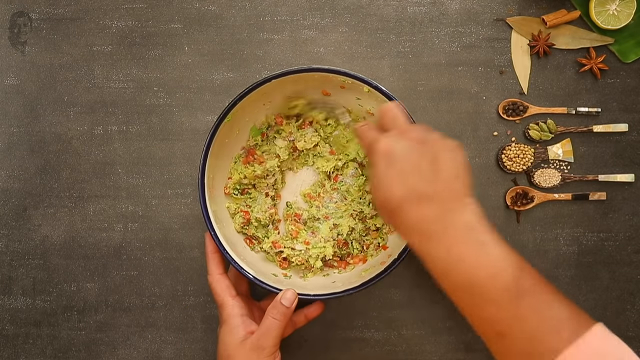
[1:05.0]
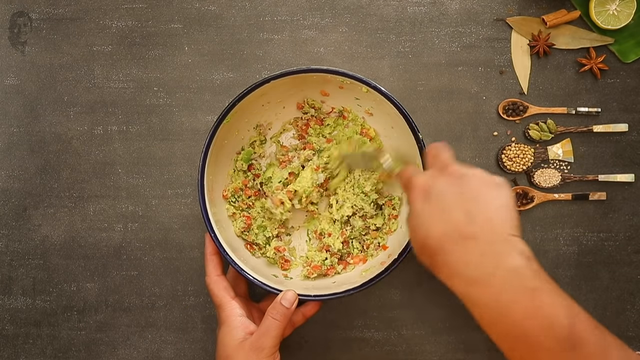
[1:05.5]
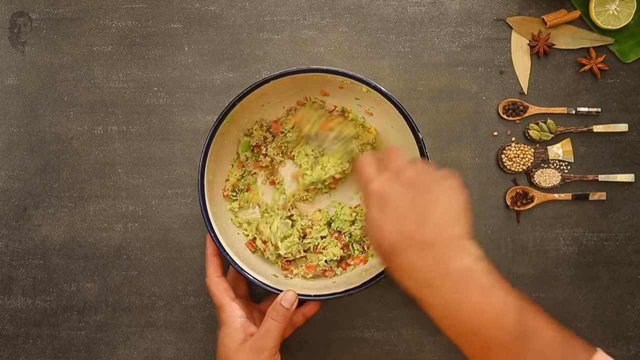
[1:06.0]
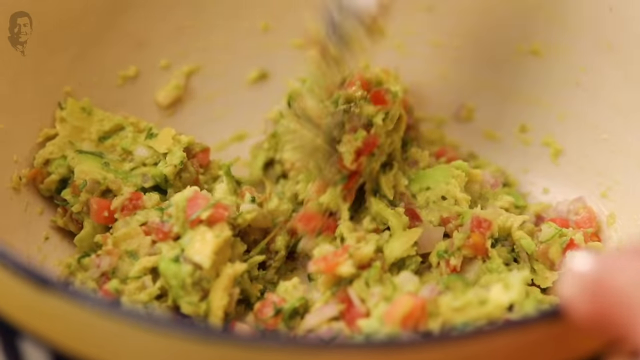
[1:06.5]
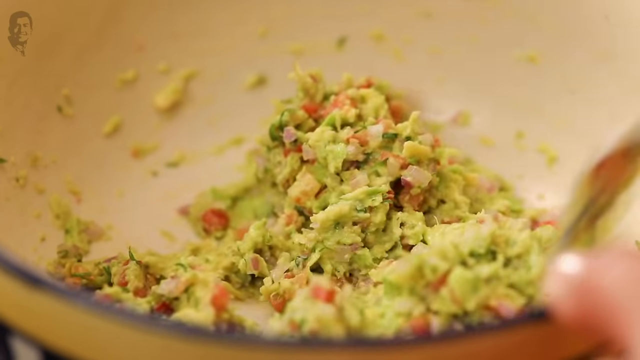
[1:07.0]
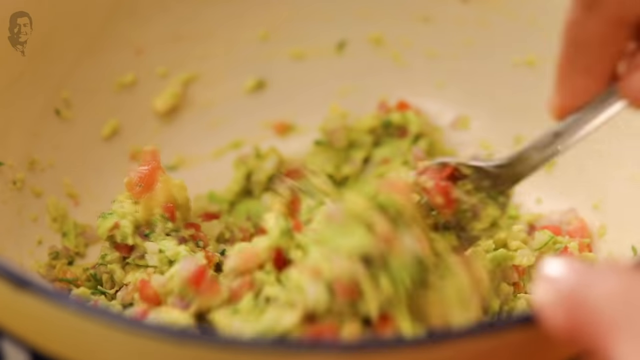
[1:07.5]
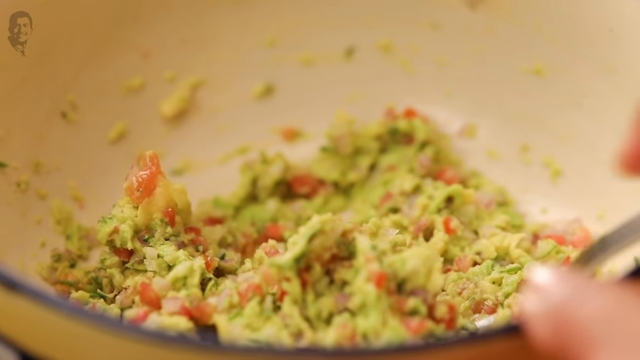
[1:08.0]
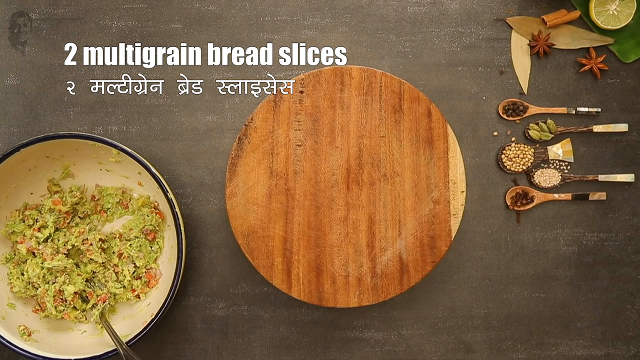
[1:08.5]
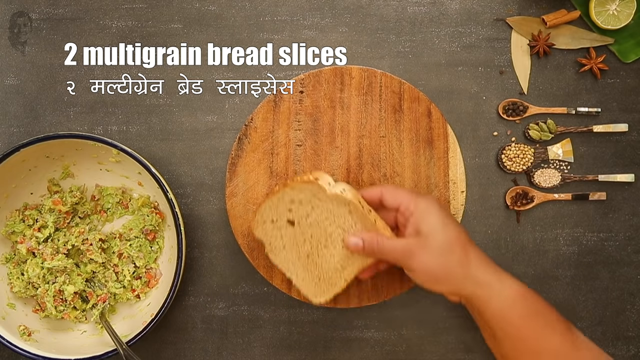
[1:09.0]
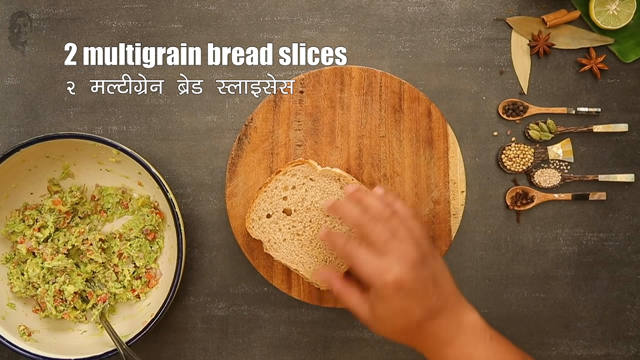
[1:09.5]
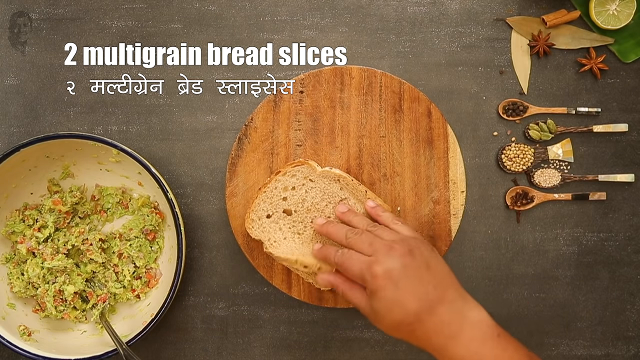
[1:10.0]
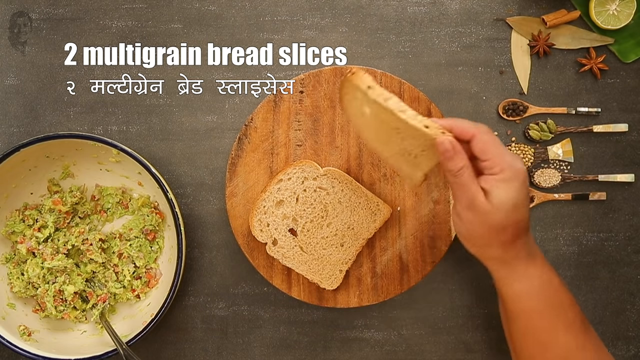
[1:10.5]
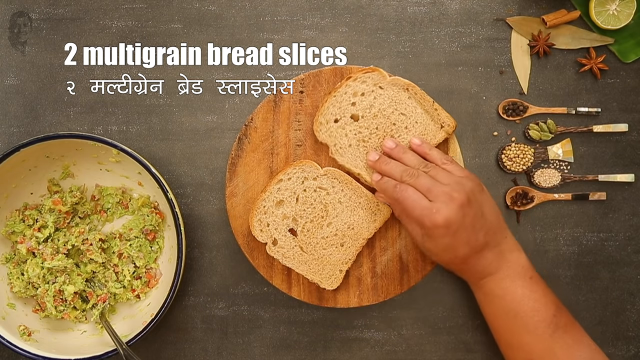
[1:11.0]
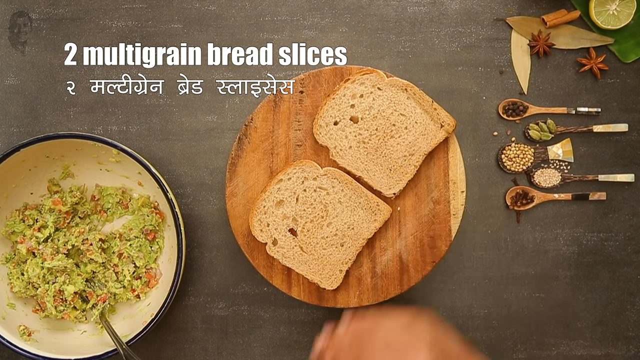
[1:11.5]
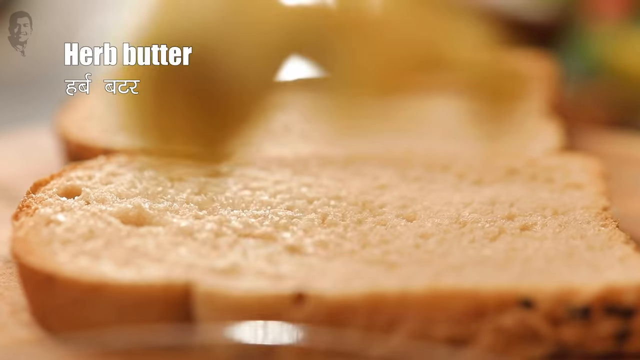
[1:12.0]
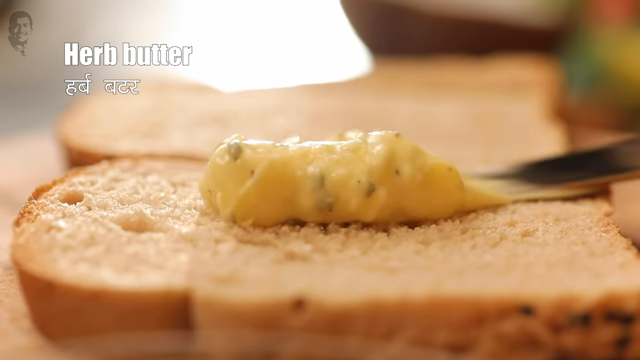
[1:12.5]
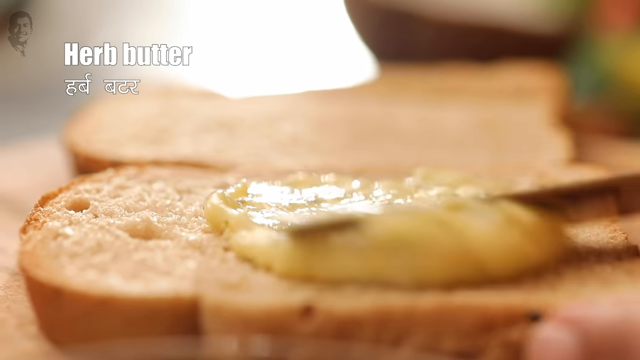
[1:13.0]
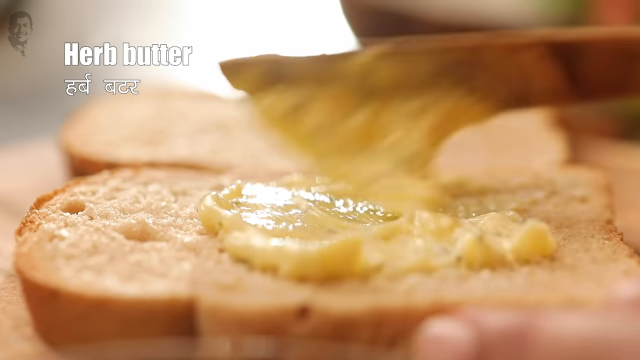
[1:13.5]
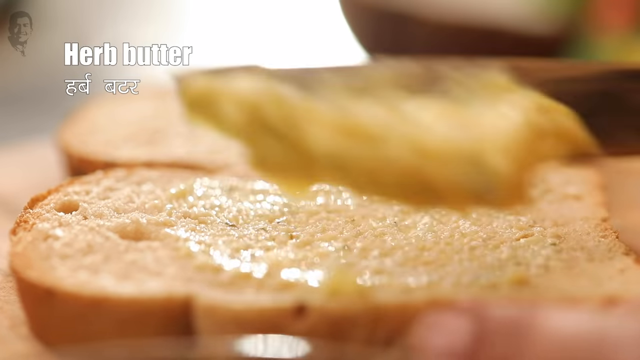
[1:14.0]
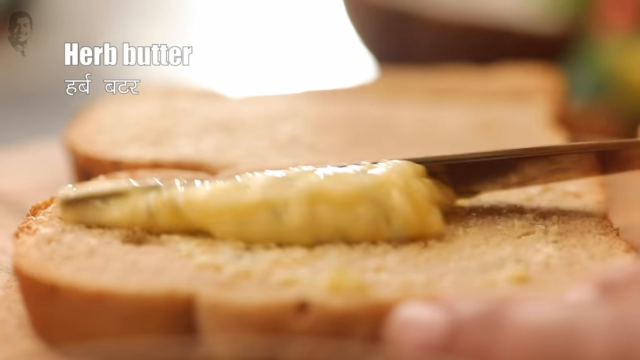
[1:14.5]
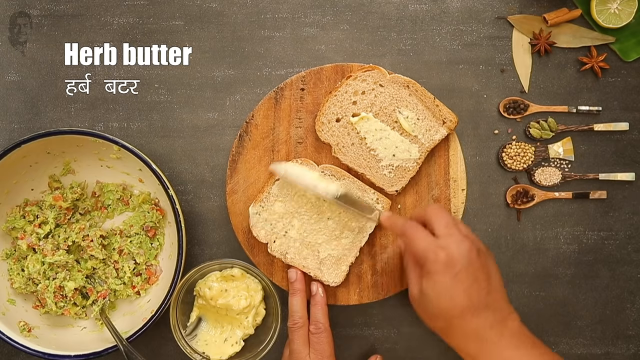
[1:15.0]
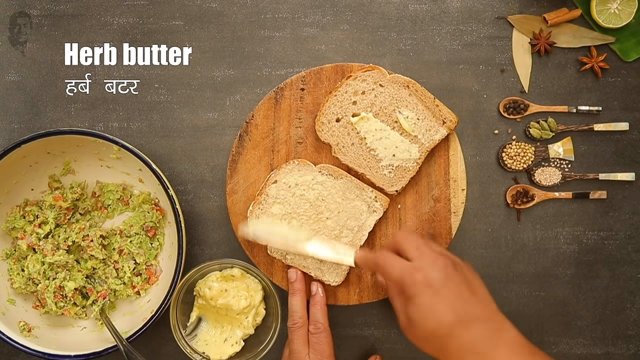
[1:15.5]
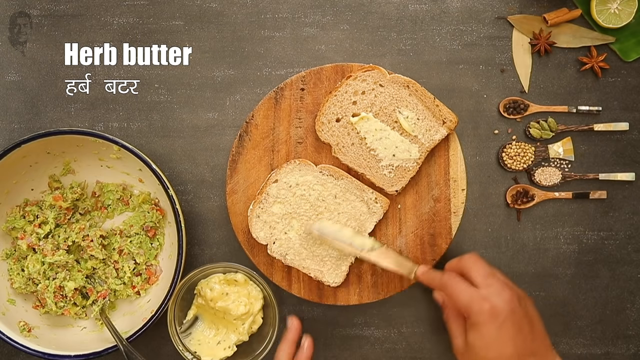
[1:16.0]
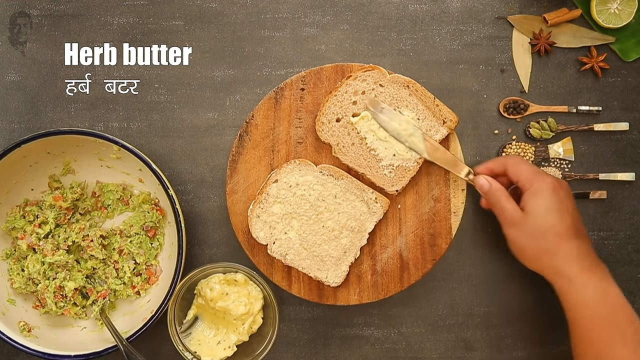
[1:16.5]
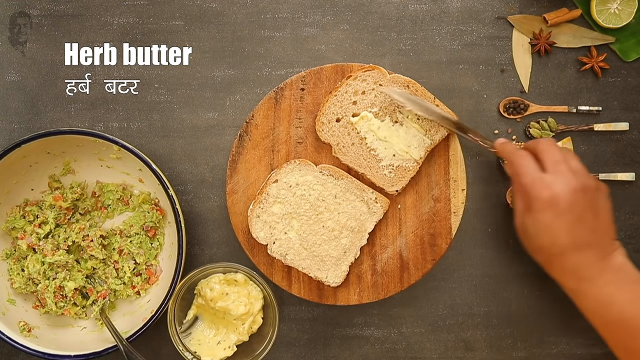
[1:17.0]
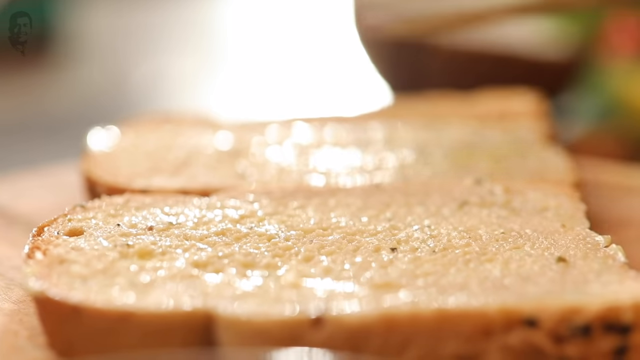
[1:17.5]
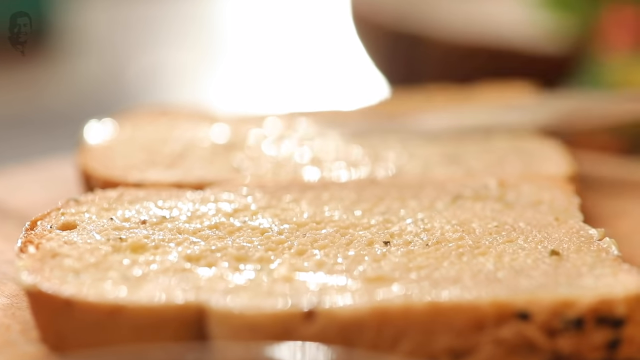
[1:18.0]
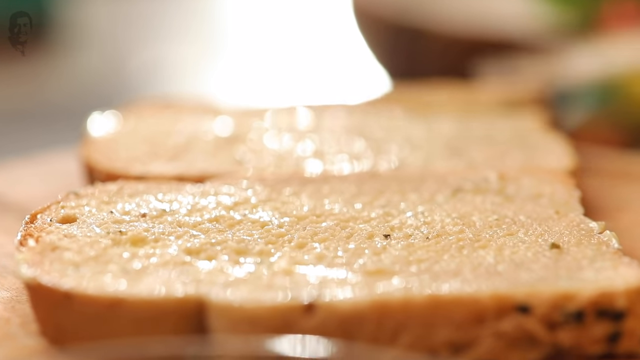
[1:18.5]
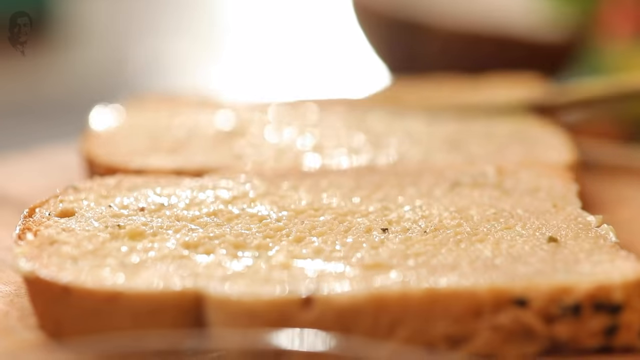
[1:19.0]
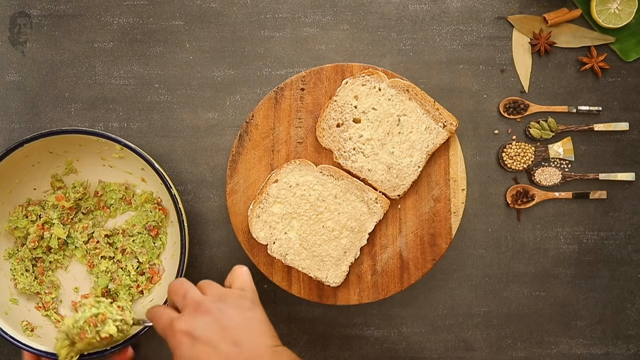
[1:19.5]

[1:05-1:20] The avocado mix is in a bowl, and the young woman gives it one more small stir; it looks pasty. She brings out two slices of brown multi-grain bread, which are on the round wood cutting board, and spreads herb butter on both slices. She gives the avocado mix one more stir with her fork and places it on the multi-grain bread. She looks like she is about finished.